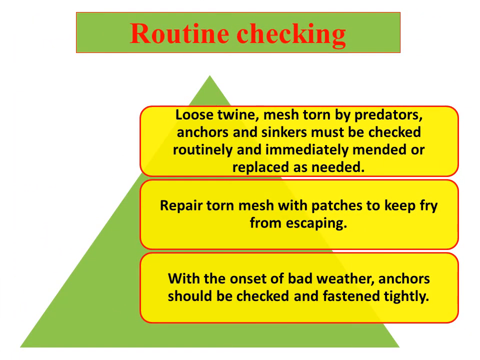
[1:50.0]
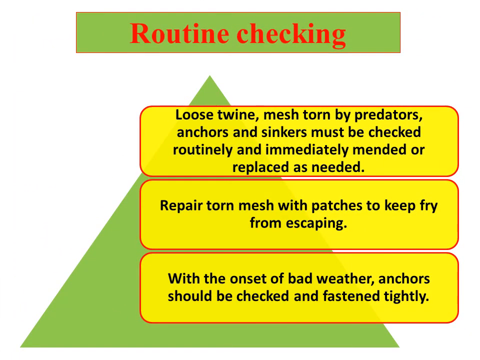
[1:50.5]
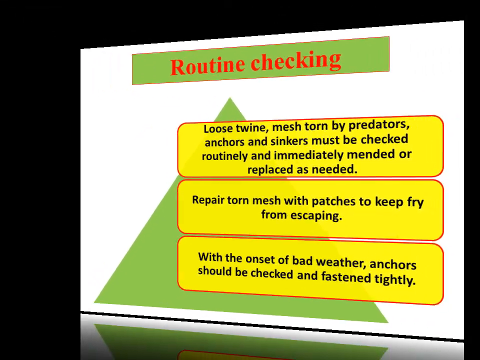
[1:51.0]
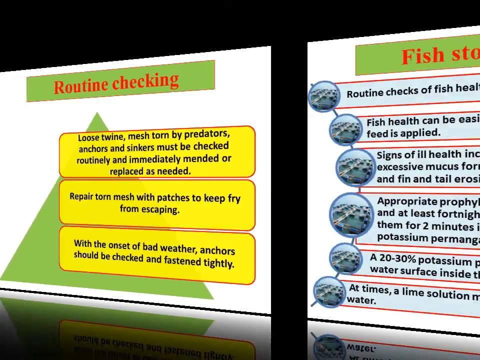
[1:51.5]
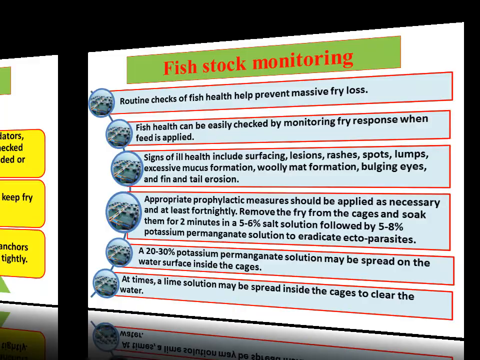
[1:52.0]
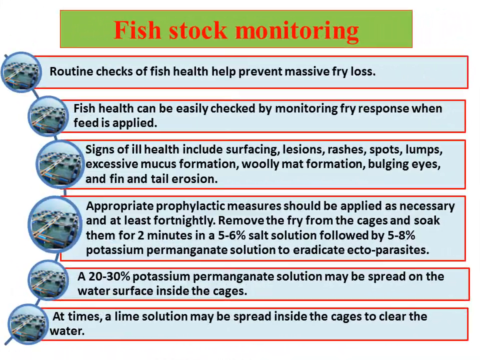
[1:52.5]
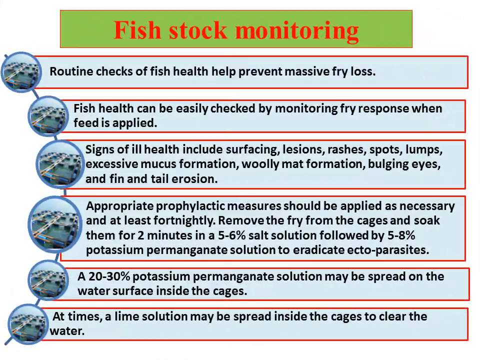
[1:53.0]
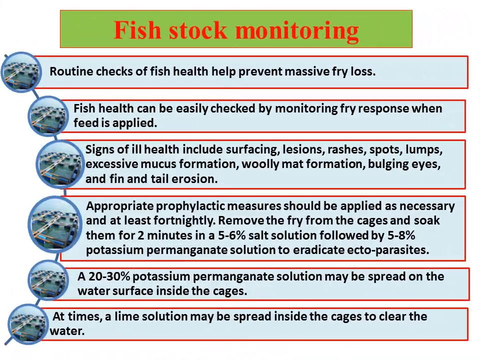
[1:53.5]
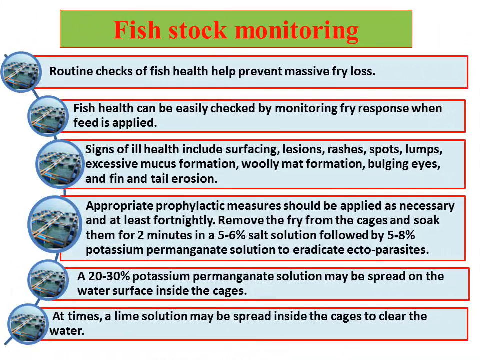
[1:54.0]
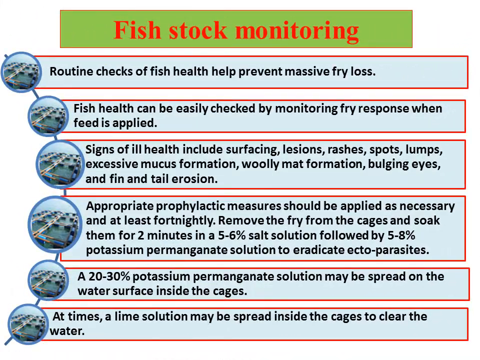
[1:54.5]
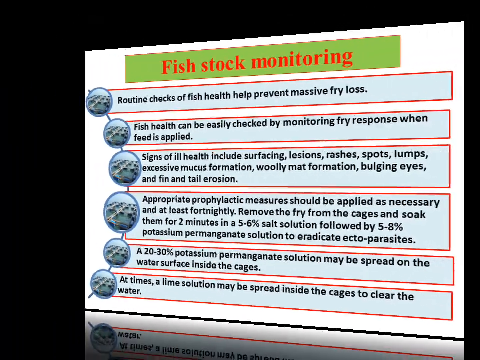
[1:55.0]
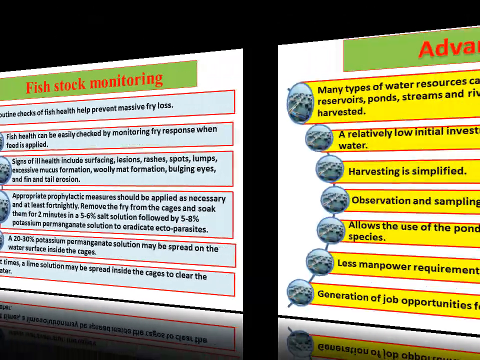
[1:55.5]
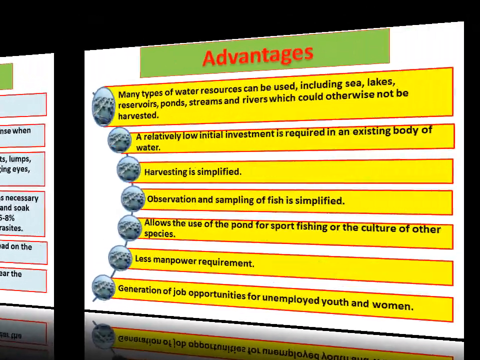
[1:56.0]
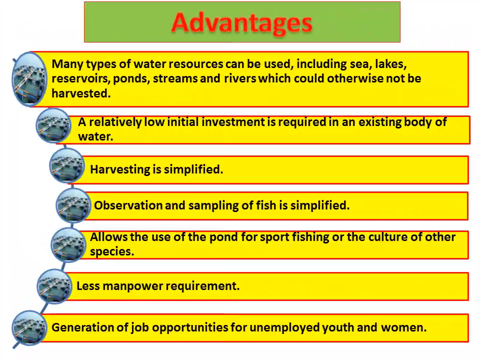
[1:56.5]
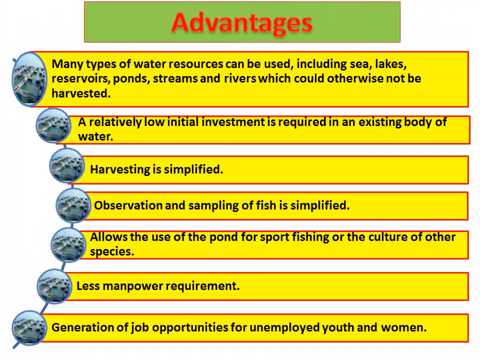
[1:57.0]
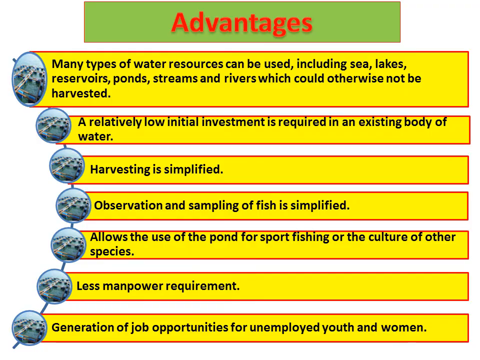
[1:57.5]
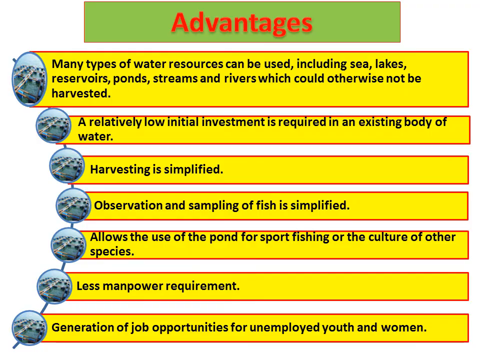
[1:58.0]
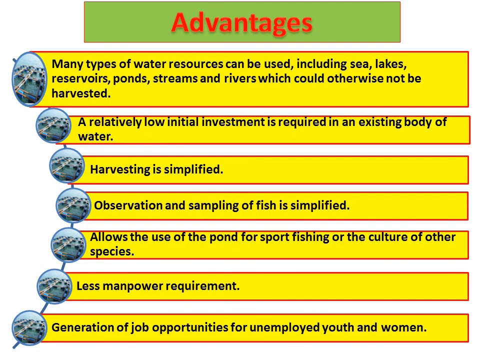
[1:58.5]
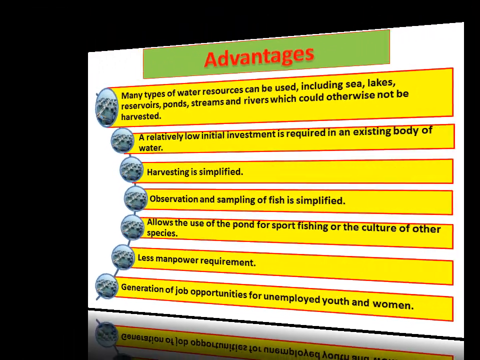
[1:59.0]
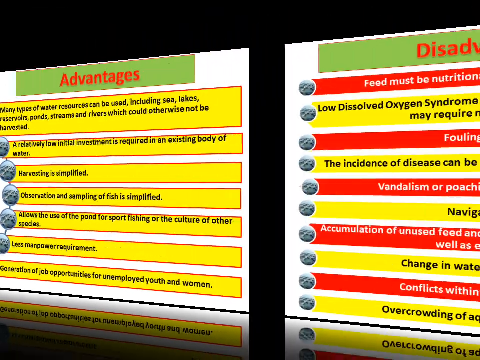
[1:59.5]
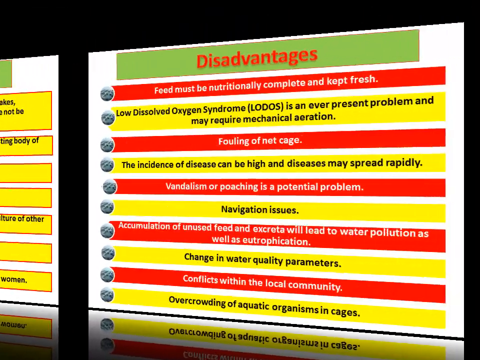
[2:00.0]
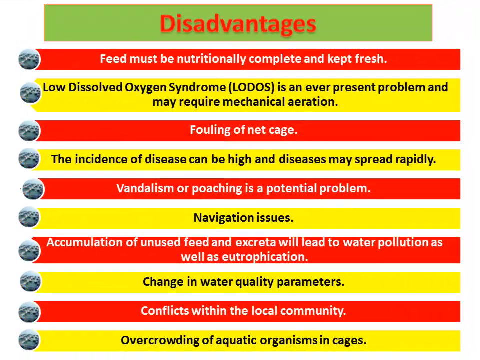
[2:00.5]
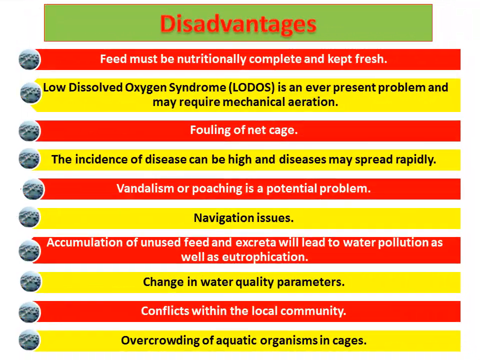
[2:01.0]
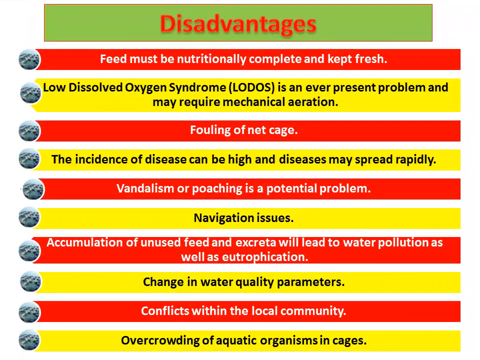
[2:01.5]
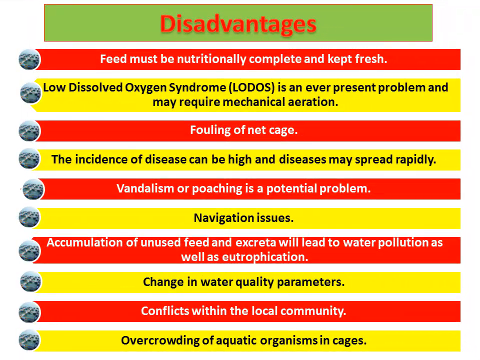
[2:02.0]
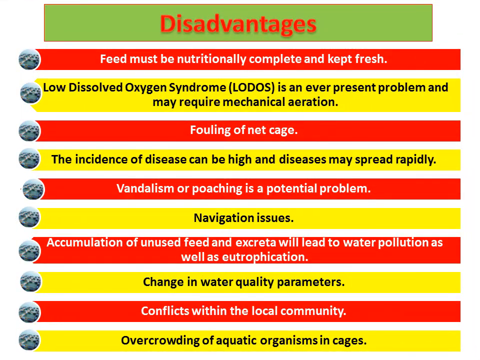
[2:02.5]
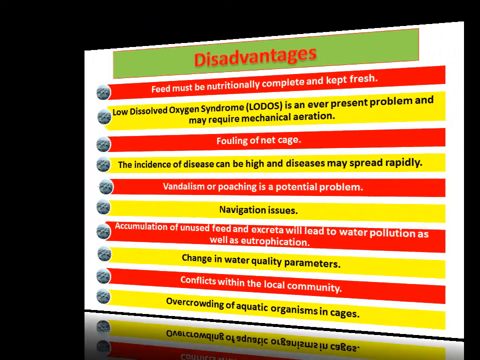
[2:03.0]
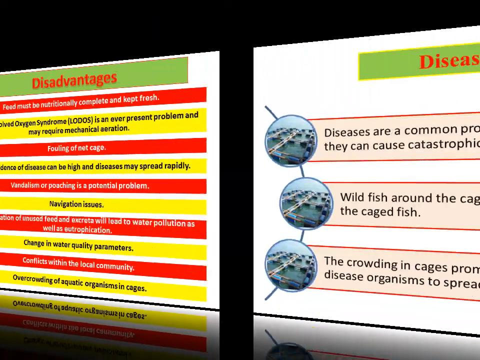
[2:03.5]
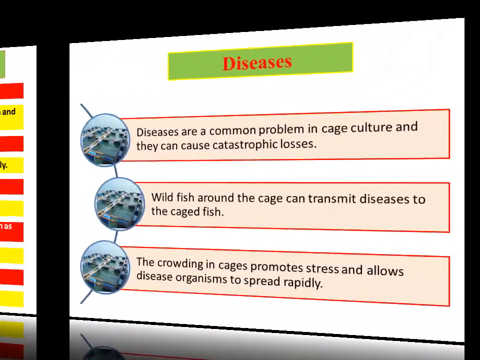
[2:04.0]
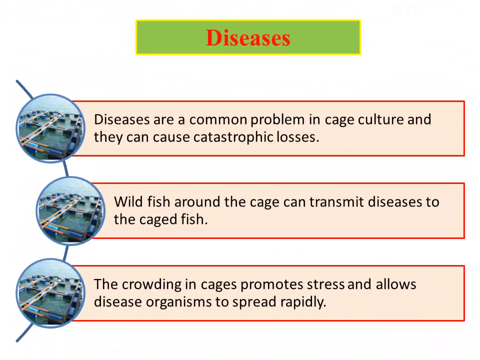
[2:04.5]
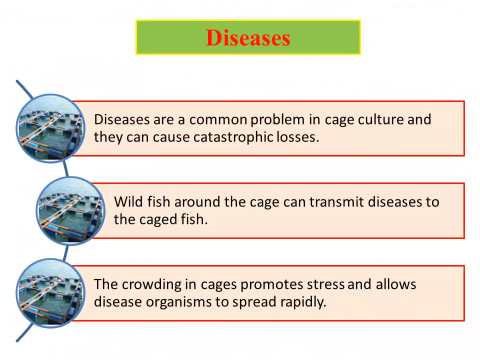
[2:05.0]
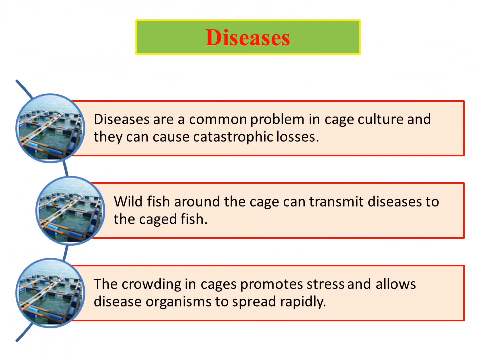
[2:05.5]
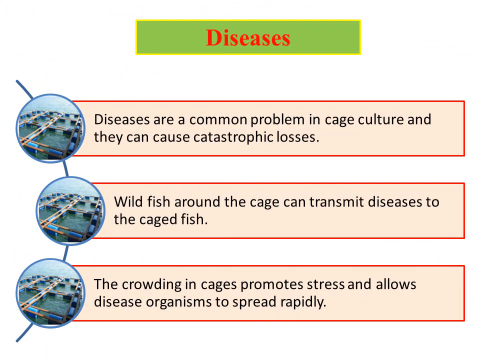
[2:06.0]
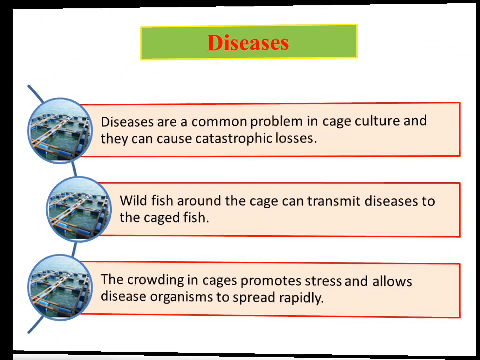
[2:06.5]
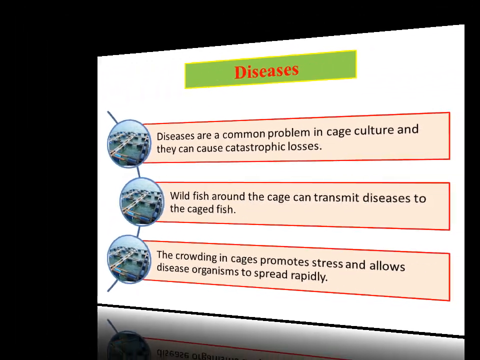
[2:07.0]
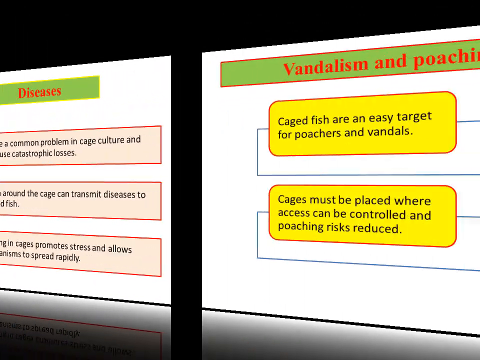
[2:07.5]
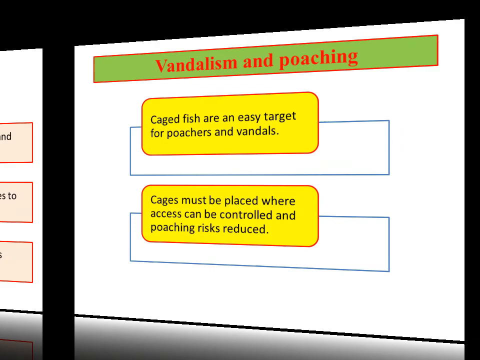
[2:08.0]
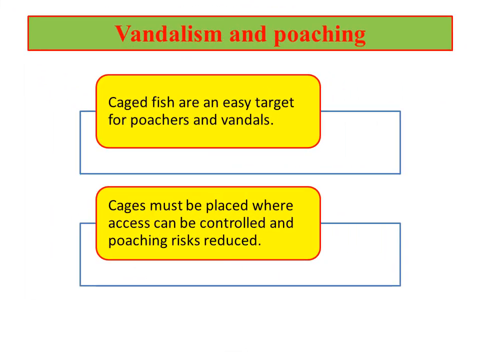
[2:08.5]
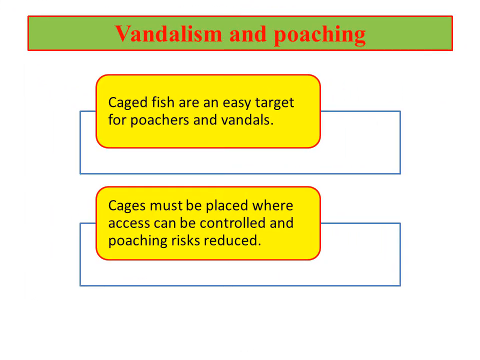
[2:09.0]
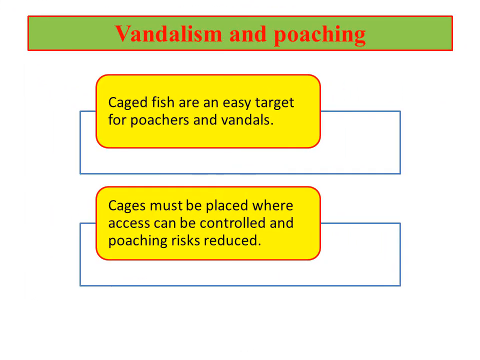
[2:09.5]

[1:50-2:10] A slide on fish stock monitoring calls for routine checks of how healthy the fish are, checking for signs of ill health such as lesions, rashes or lumps, applying appropriate prophylactic measures as necessary, and removing ill or diseased fish from the cages. The advantages of cage fishing are listed: low initial investment, simple harvesting, simple observation and sampling of fish, use of the pond for sports fishing or other activities, less manpower required, and job opportunities for unemployed people. Disadvantages follow: feed must be nutritionally complete and fresh, low dissolved oxygen syndrome, fouling of the net cage, a high incidence of disease, vandalism or poaching, accumulation of unused feed and excretion leading to water pollution, changes in water quality parameters, and conflicts with the local community. Another slide states that diseases are a common problem in cage culture and can cause catastrophic losses, that wild fish around the cage can transmit diseases, that crowding in cages promotes stress so diseases can spread rapidly, and that vandalism and poaching are also a concern.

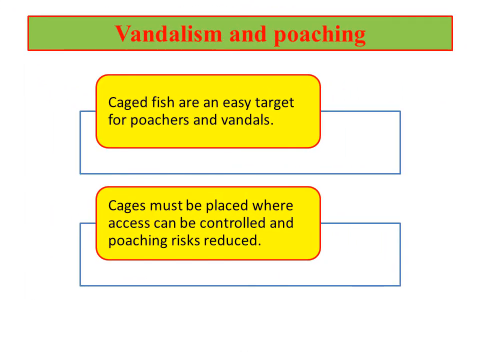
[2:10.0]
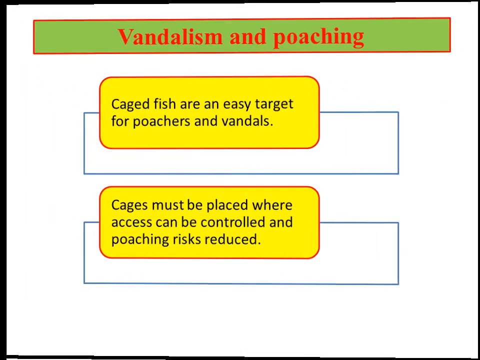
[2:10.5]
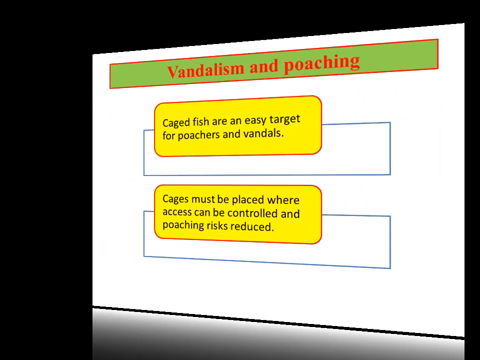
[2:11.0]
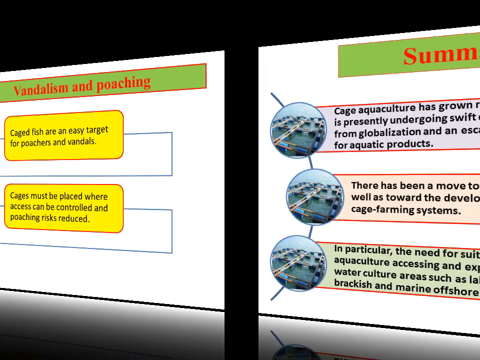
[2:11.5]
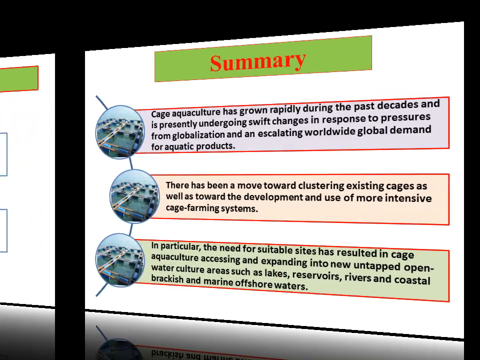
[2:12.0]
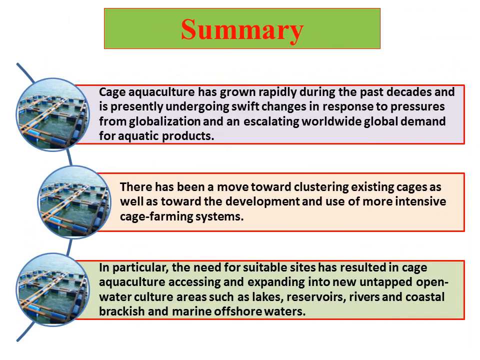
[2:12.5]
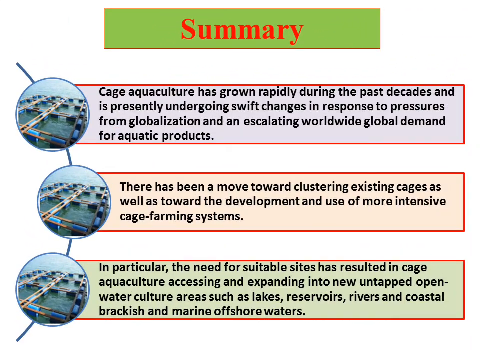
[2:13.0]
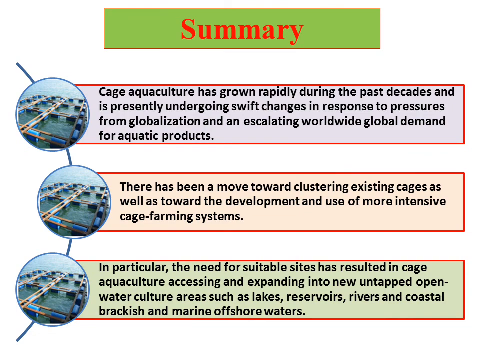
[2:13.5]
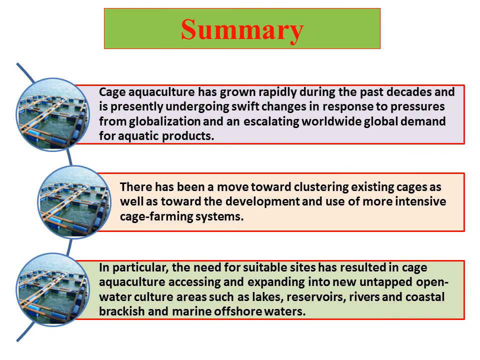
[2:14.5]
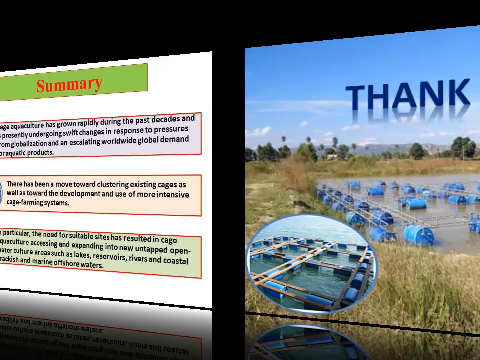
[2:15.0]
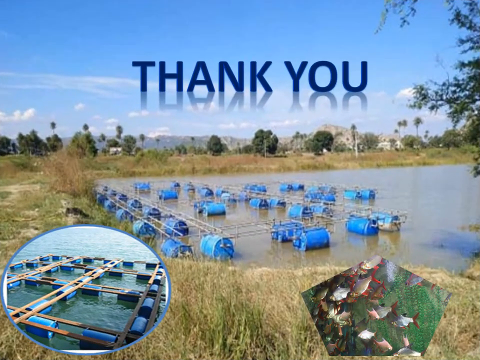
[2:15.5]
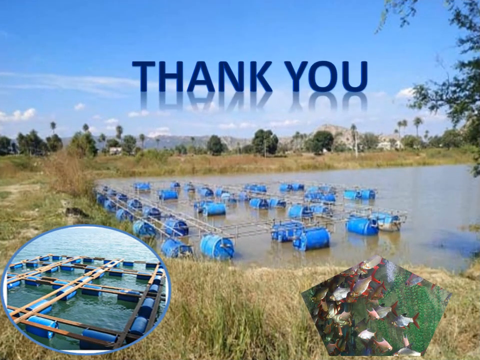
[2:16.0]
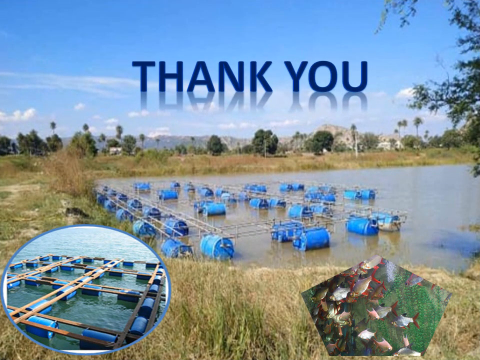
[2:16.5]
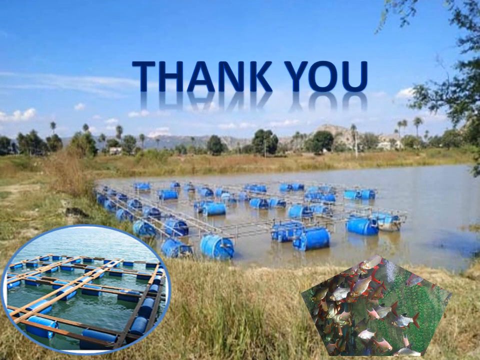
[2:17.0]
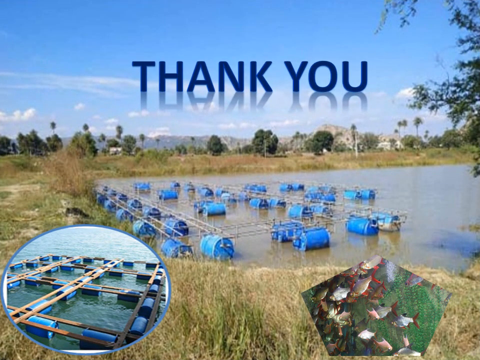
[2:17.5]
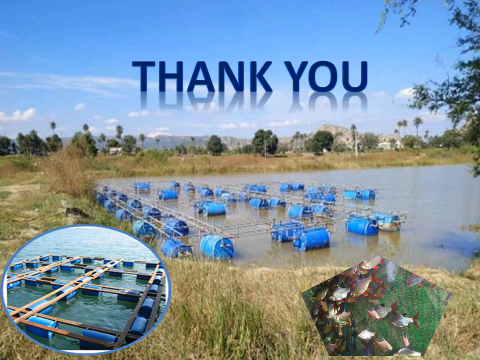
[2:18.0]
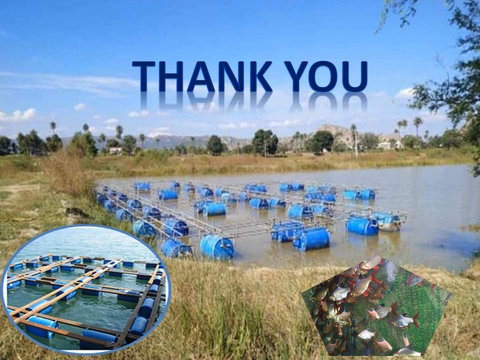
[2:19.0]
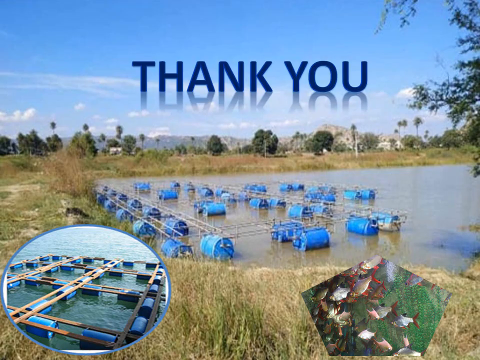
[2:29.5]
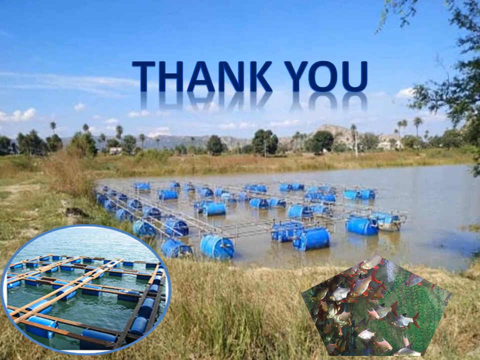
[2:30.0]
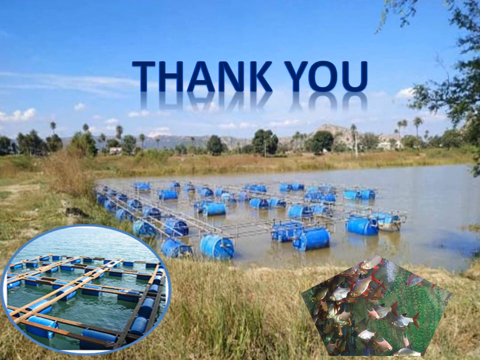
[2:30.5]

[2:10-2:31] A summary slide states that cage aquaculture has grown rapidly during the past decades and is presently undergoing swift changes in response to pressures from globalization and escalating worldwide demand for aquatic products; that there has been a move toward clustering existing cages and toward more intensive cage farming systems; and that the need for suitable sites has led cage aquaculture to expand into new untapped open water areas such as lakes, reservoirs, rivers, and coastal brackish and marine offshore waters. The picture from the start of the presentation then appears: the caged fish farm with wooden plank catwalks and large blue floating barrels on what looks like a pond or a lake, surrounded by a grassy embankment. Wording across the top of the screen in blue says "thank you."